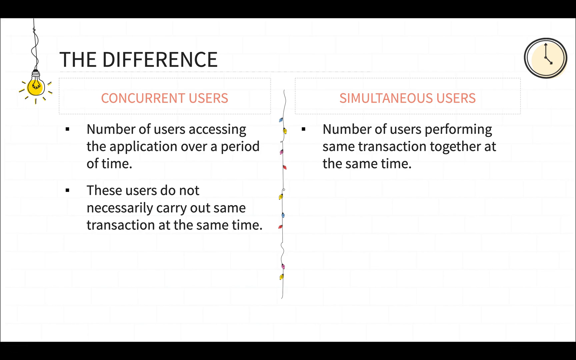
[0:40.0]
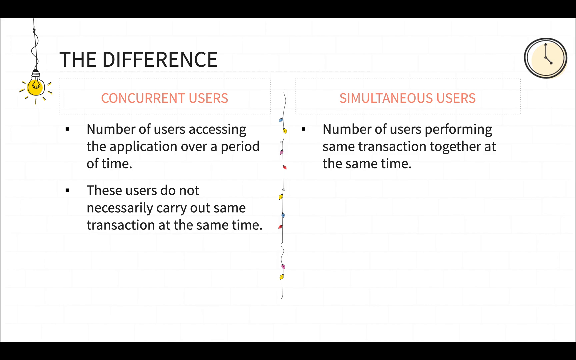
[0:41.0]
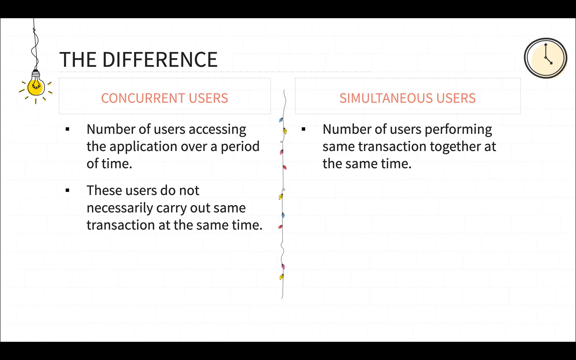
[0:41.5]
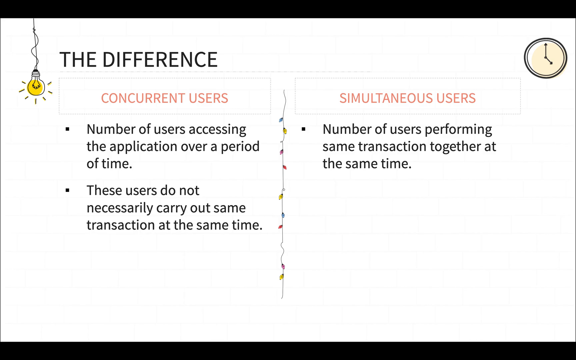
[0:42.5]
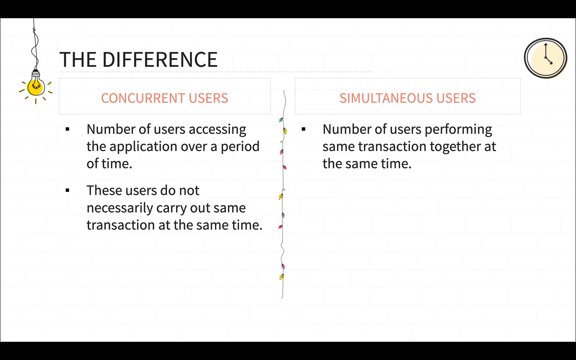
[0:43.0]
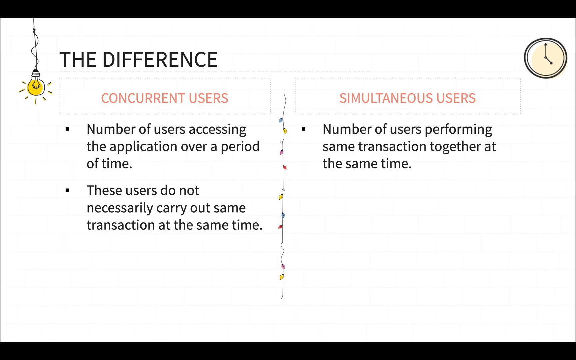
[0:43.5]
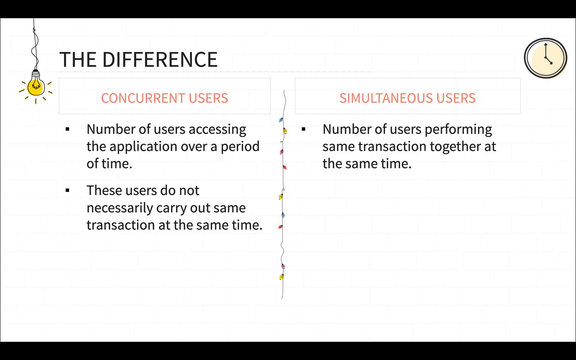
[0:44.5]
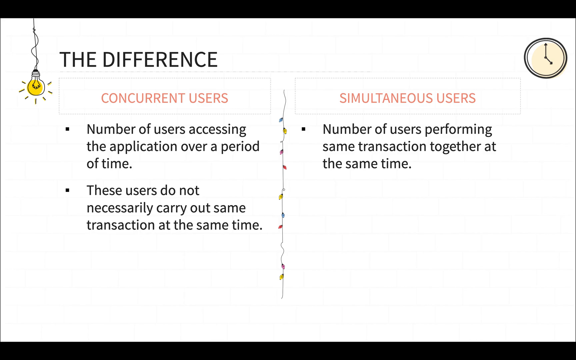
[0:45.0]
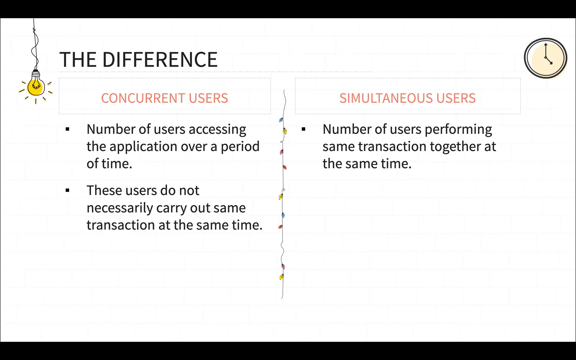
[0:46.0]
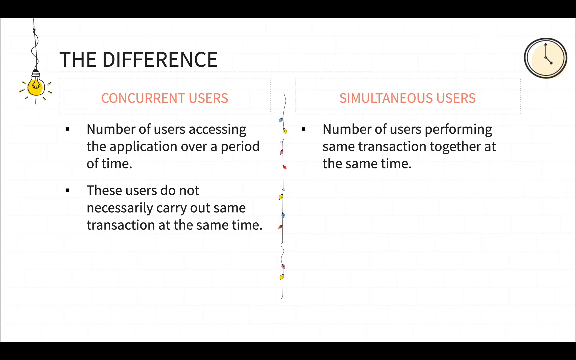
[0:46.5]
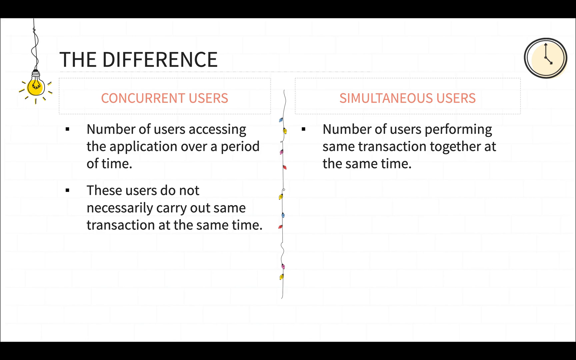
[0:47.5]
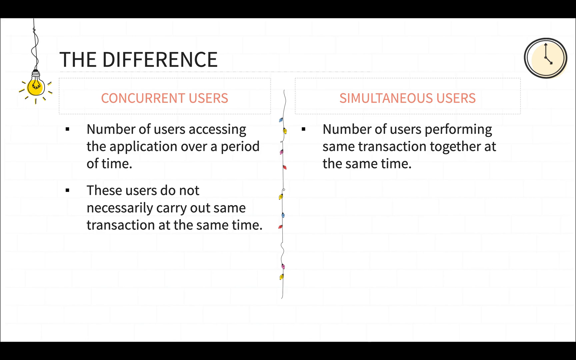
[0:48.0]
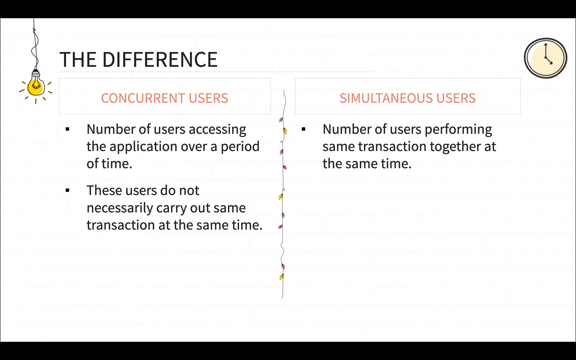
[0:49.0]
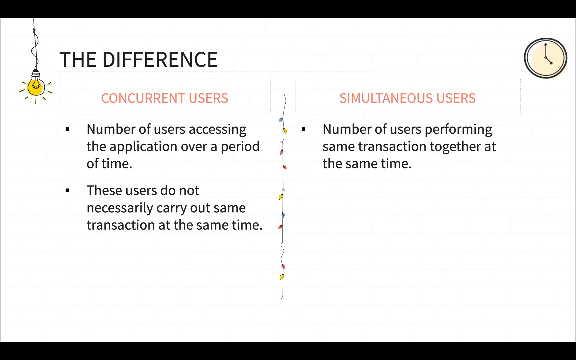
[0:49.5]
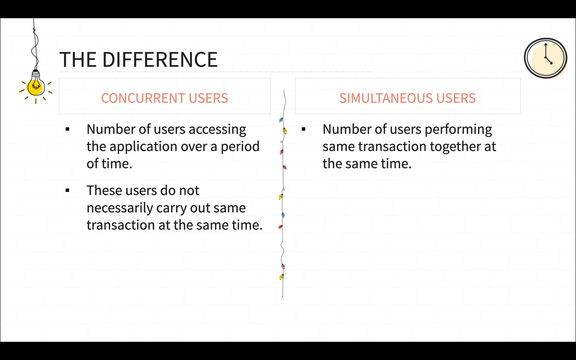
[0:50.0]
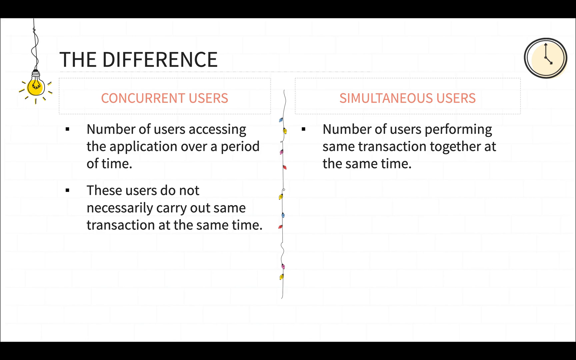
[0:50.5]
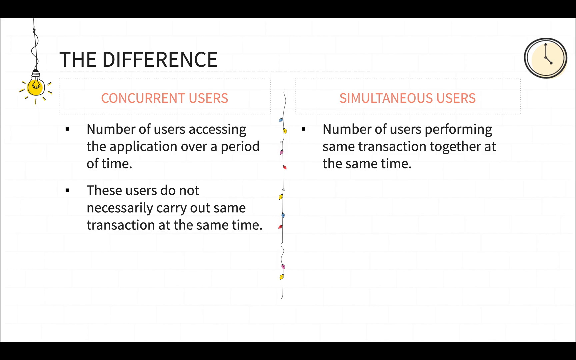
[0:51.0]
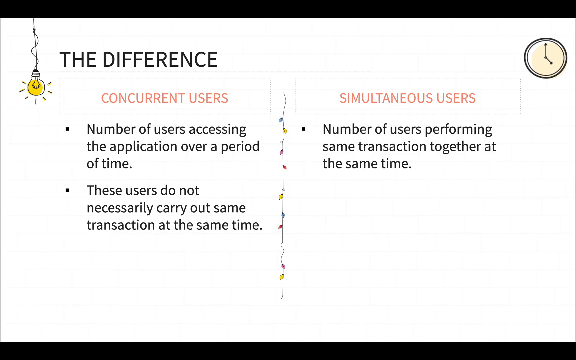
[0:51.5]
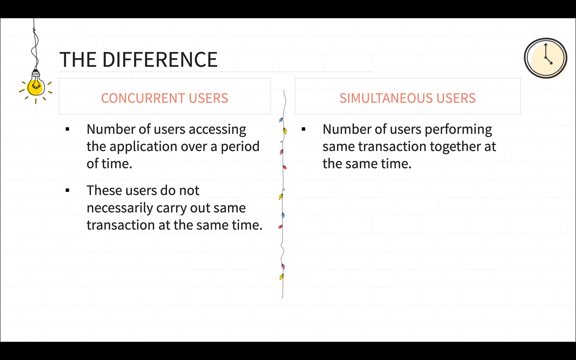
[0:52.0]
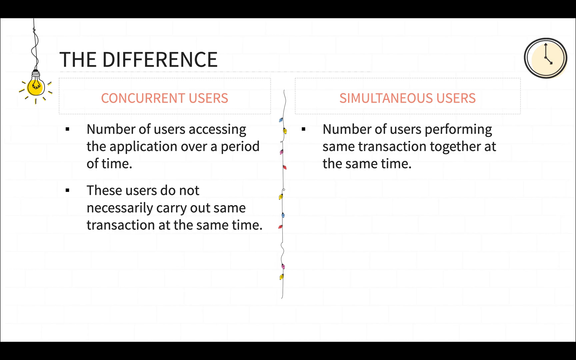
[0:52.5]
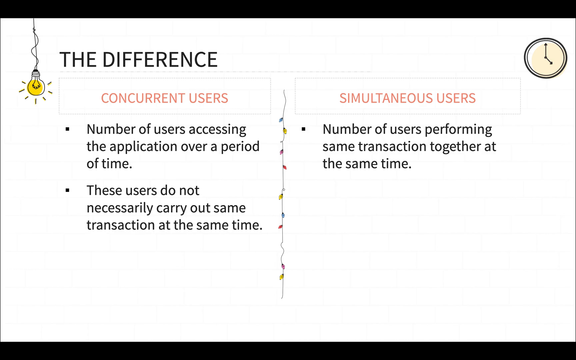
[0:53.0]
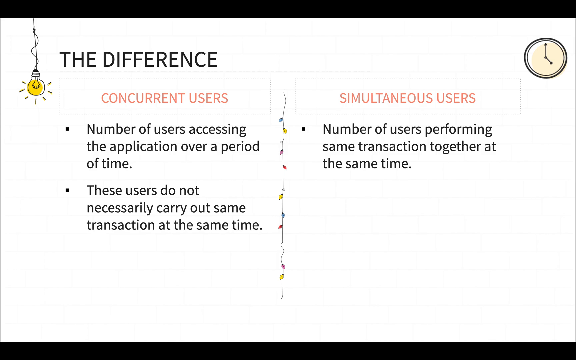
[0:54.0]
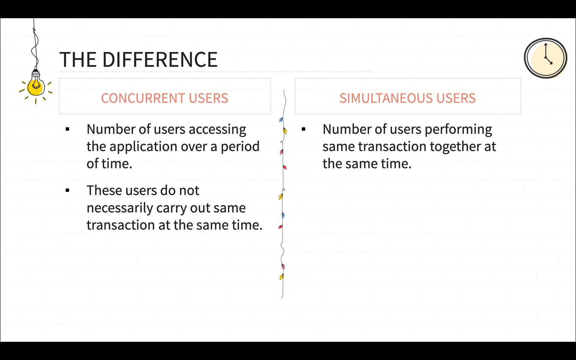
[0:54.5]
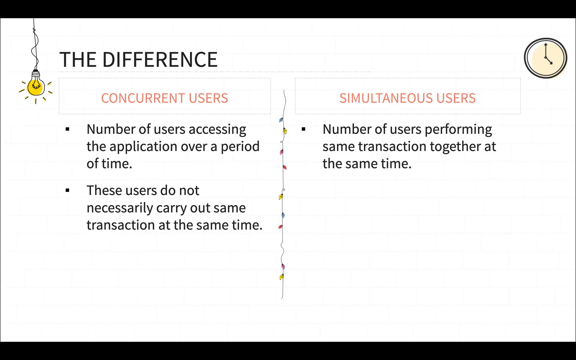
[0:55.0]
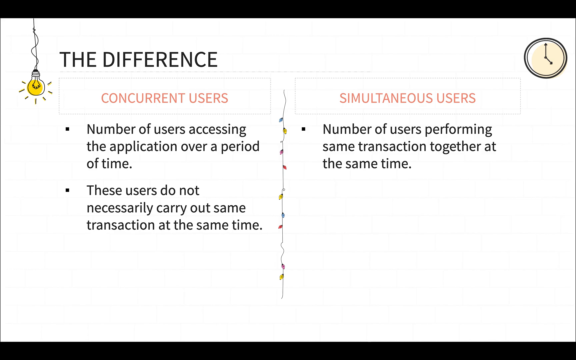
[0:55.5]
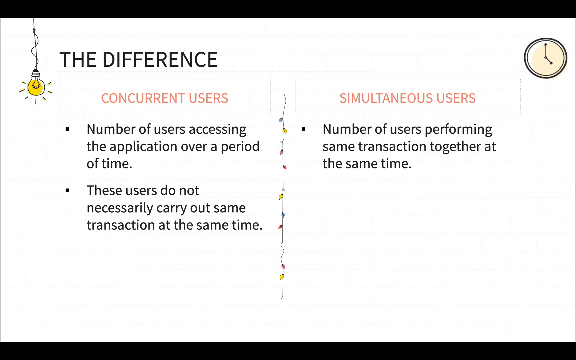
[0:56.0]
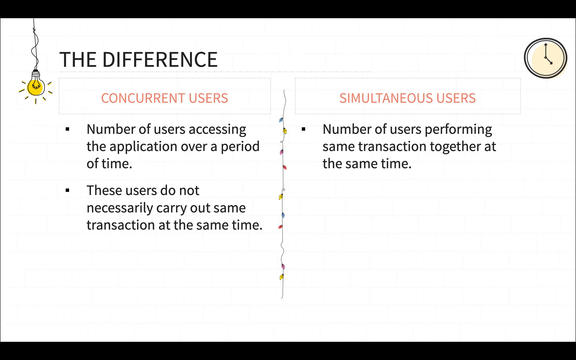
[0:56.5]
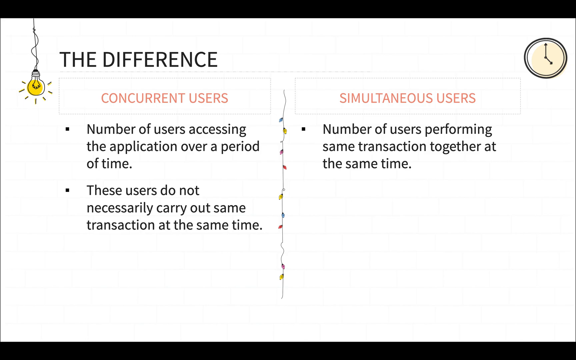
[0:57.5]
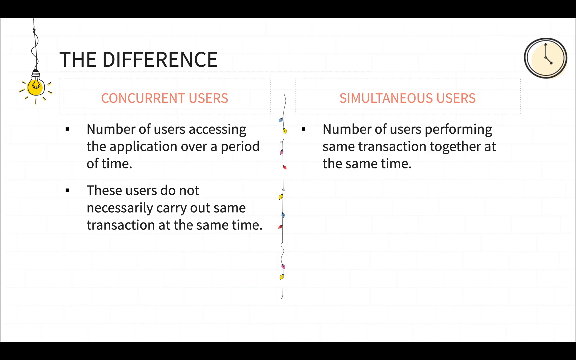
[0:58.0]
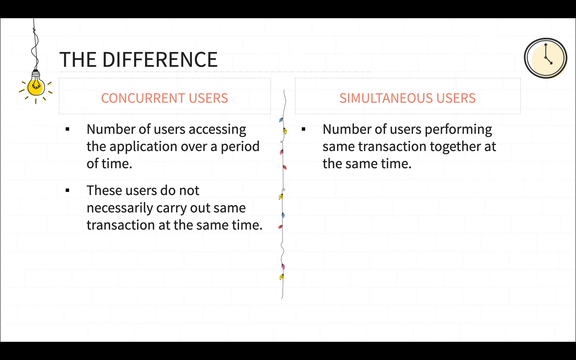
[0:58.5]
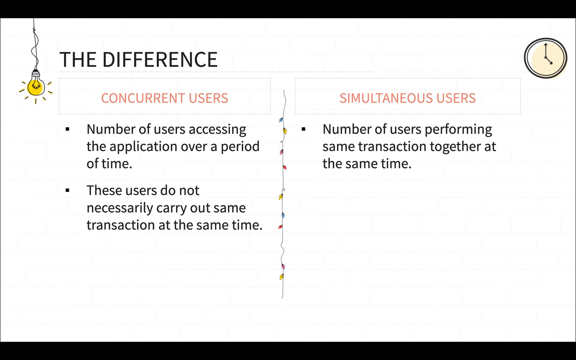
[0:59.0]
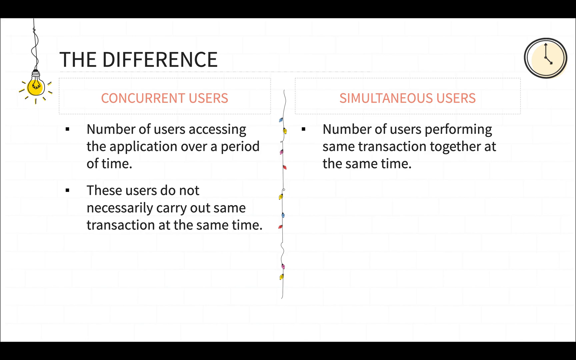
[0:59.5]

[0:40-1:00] The slide about concurrent users and simultaneous users shows the difference: concurrent users are the "number of users accessing the application over a period of time," and "these users do not necessarily carry out the same transaction at the same time," while simultaneous users are the "number of users performing the same transaction together at the same time." Ivy comes down between the sections. Nothing changes on the slide. It is white with two black borders, a light bulb in the upper left and a clock in the upper right. Most of the font is black; only the words "concurrent users" and "simultaneous users" are a color between rust and beige.